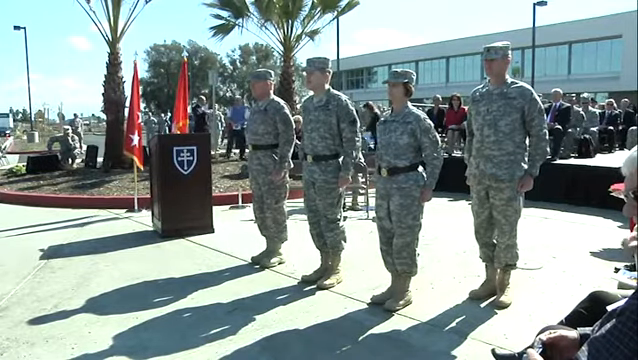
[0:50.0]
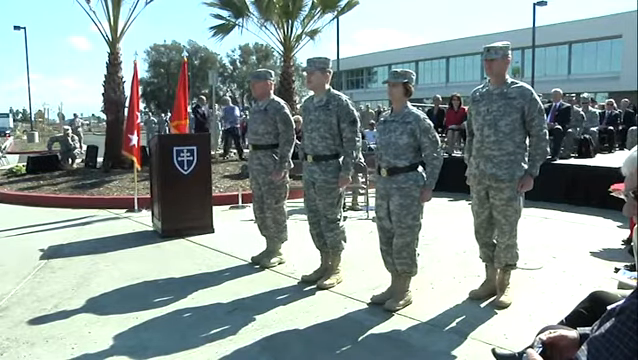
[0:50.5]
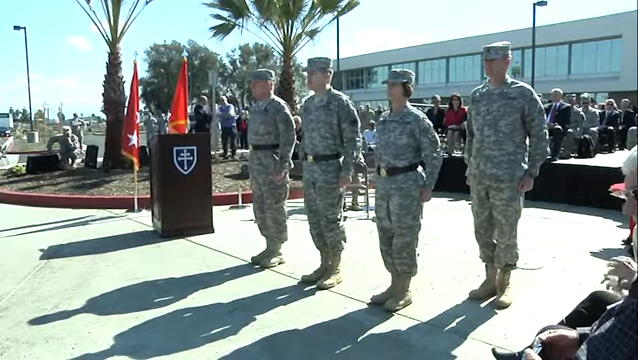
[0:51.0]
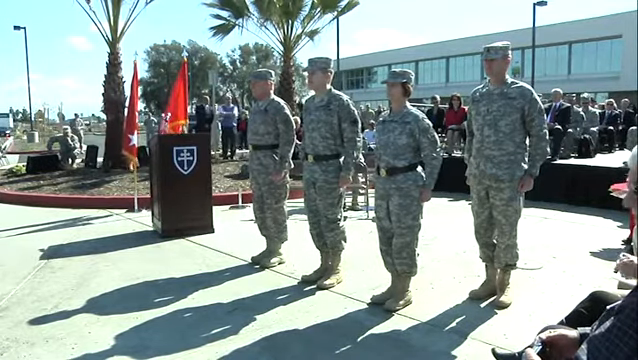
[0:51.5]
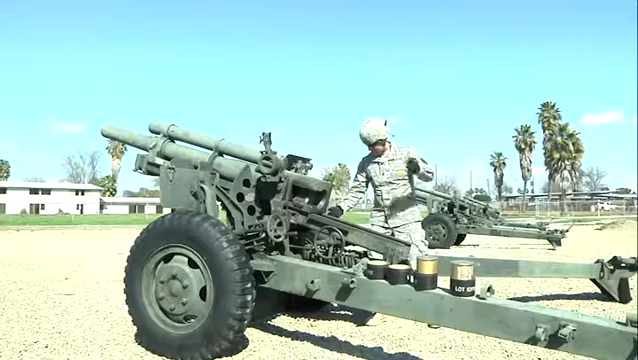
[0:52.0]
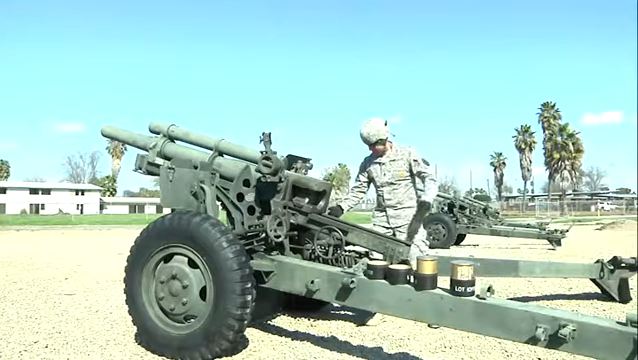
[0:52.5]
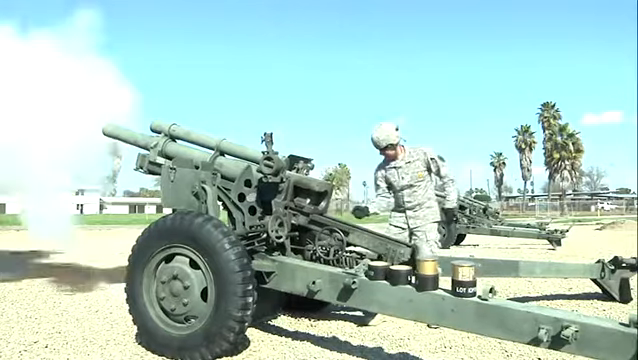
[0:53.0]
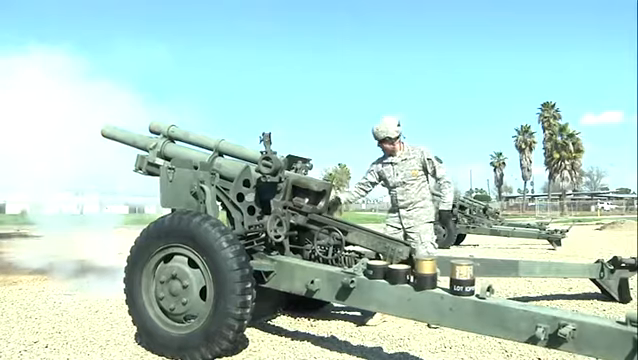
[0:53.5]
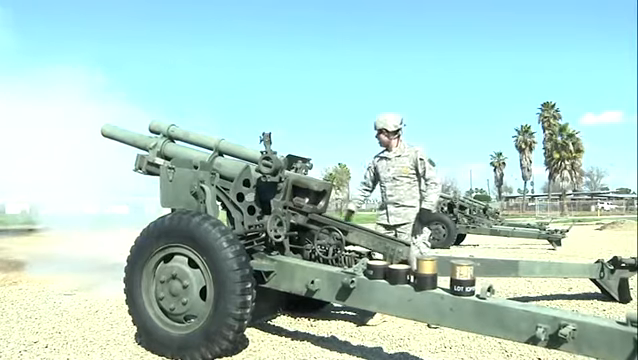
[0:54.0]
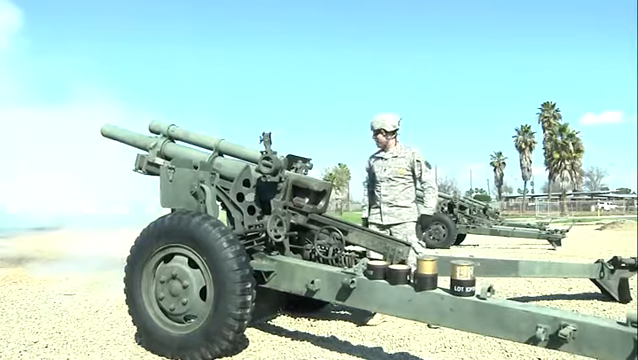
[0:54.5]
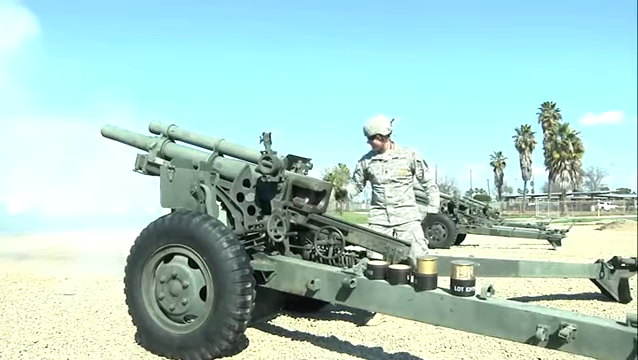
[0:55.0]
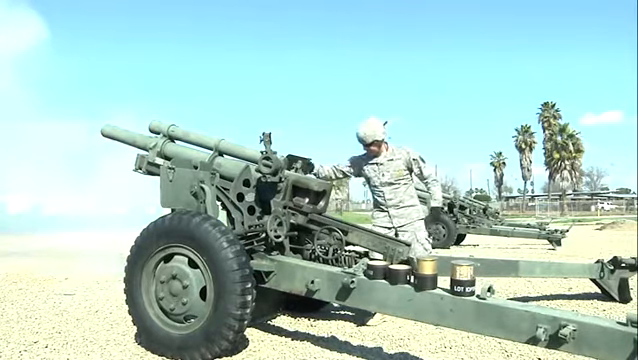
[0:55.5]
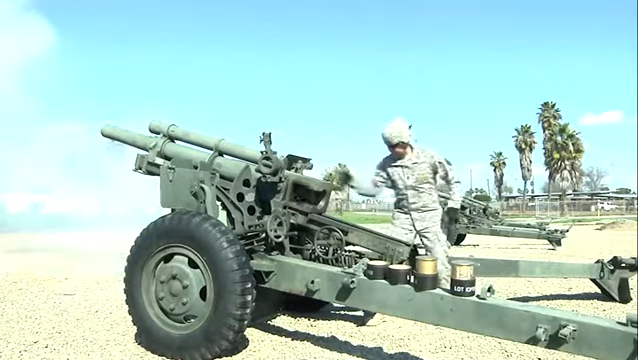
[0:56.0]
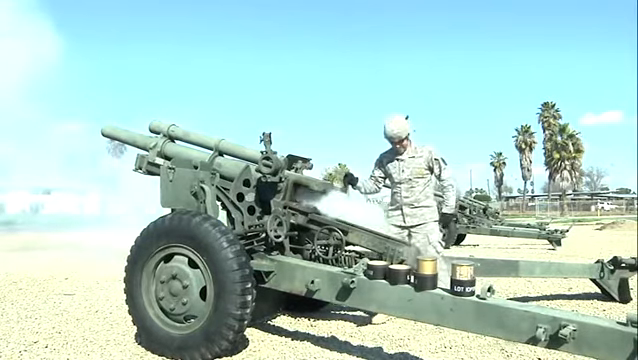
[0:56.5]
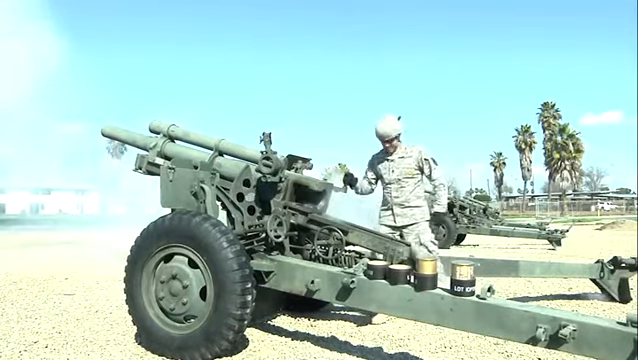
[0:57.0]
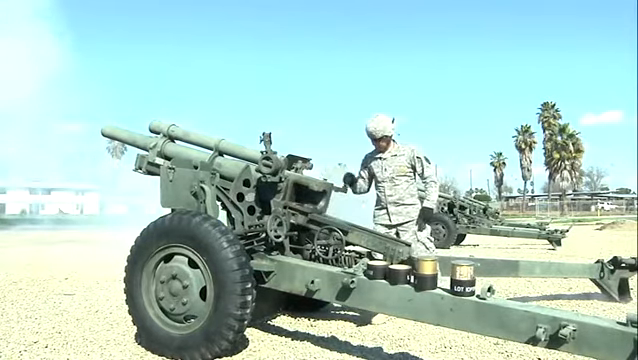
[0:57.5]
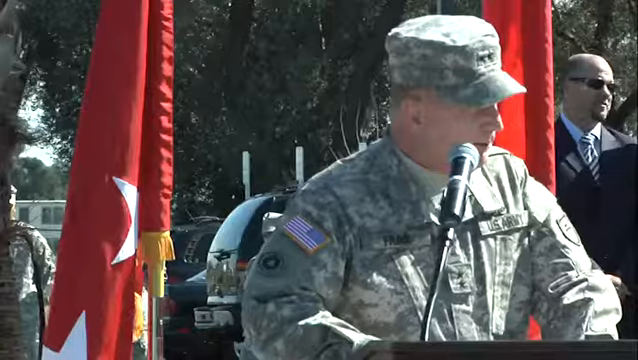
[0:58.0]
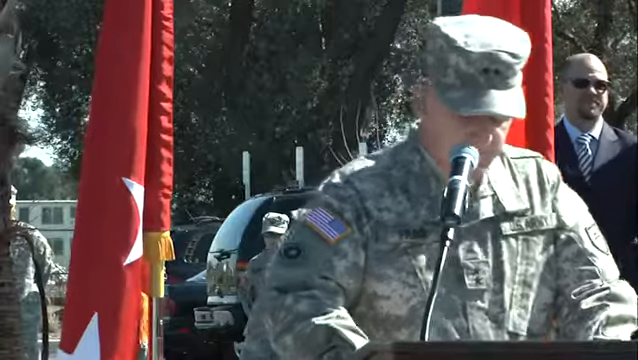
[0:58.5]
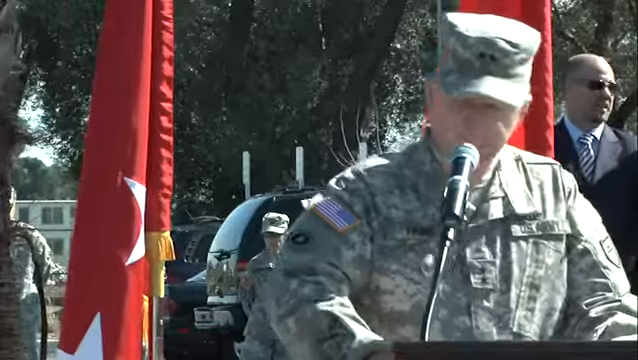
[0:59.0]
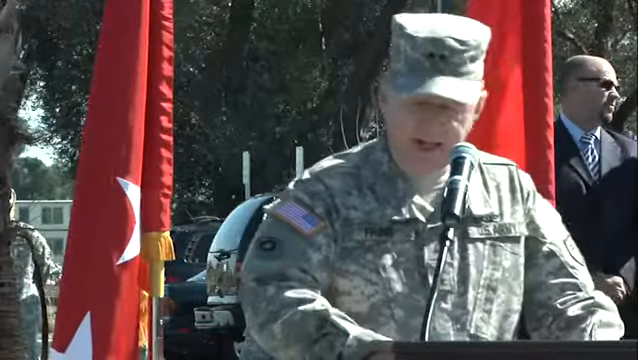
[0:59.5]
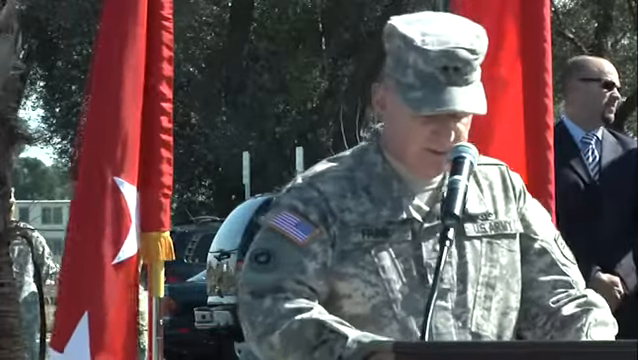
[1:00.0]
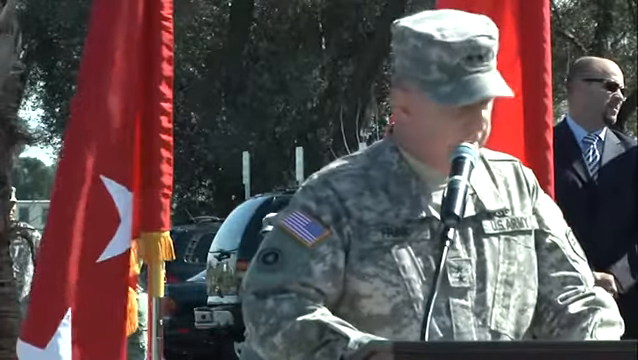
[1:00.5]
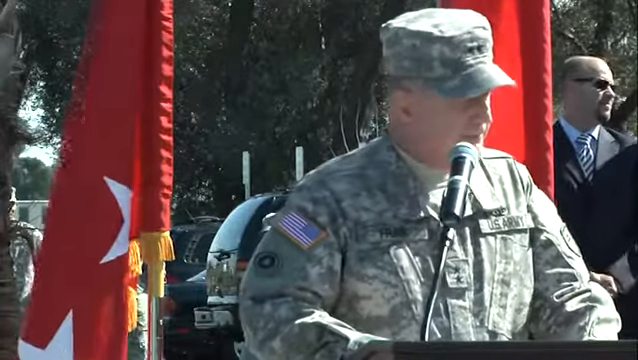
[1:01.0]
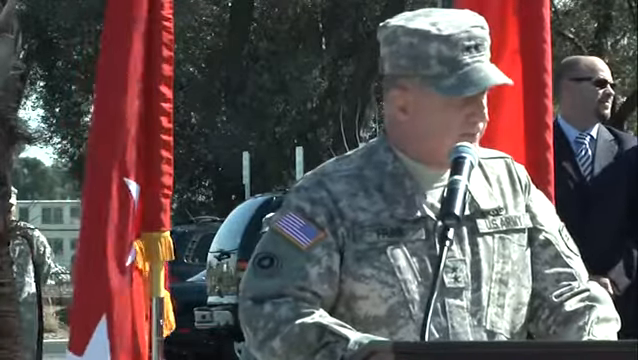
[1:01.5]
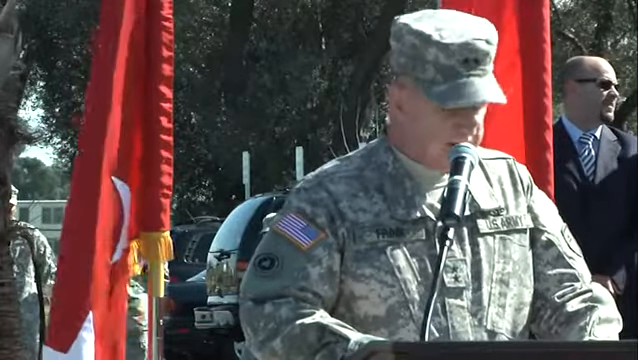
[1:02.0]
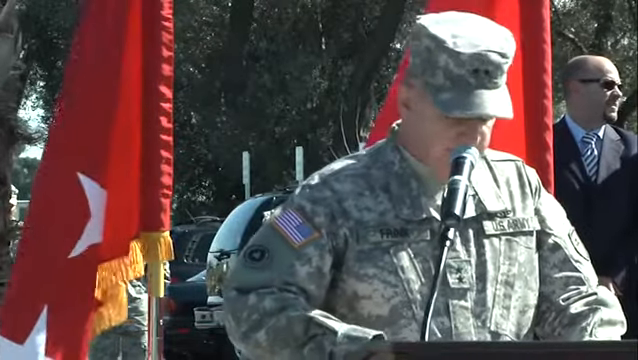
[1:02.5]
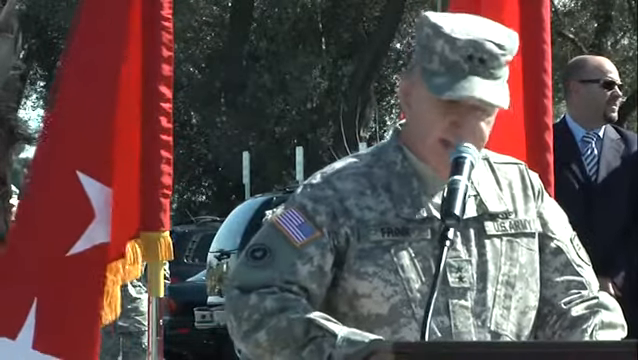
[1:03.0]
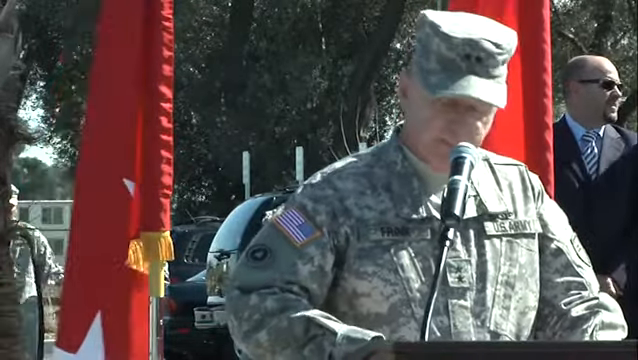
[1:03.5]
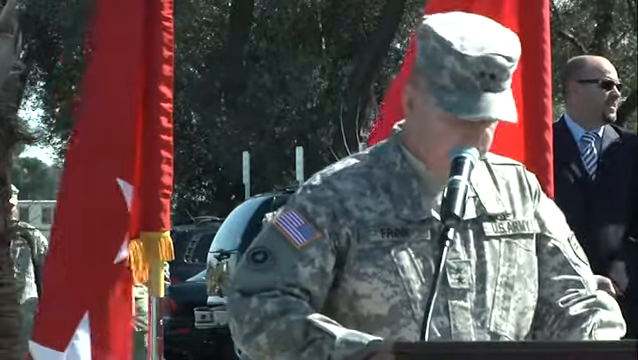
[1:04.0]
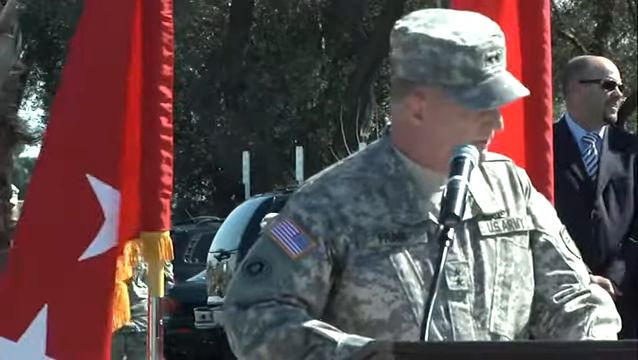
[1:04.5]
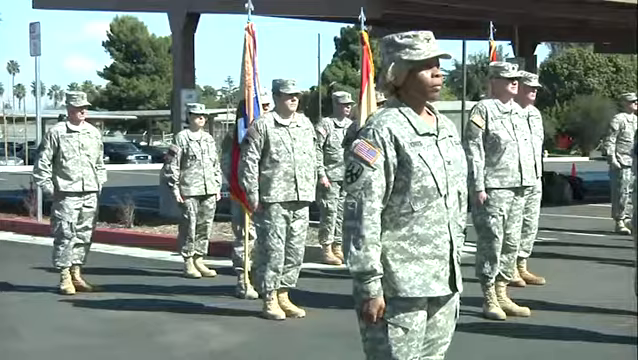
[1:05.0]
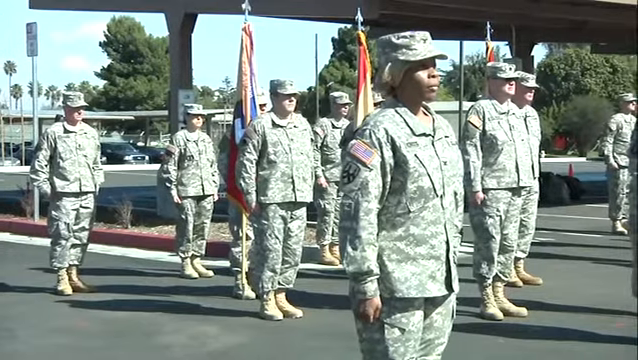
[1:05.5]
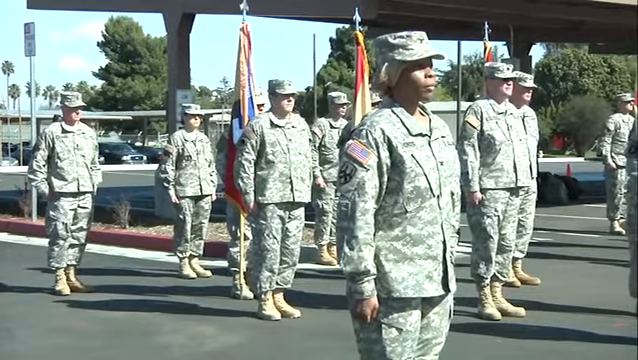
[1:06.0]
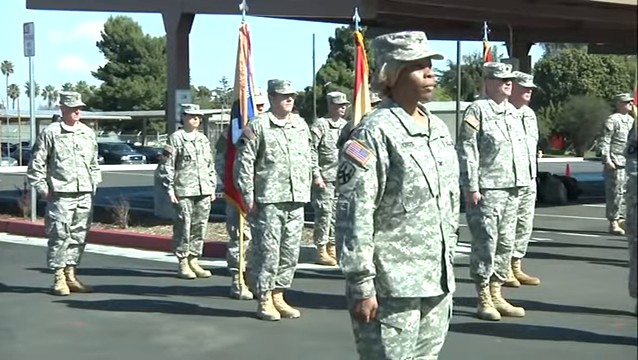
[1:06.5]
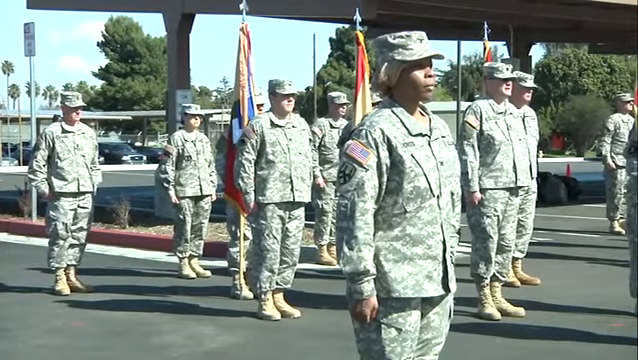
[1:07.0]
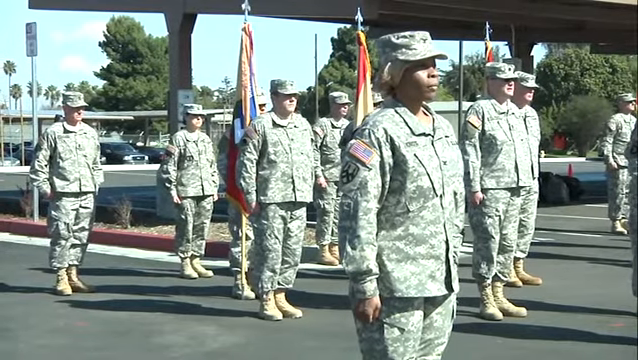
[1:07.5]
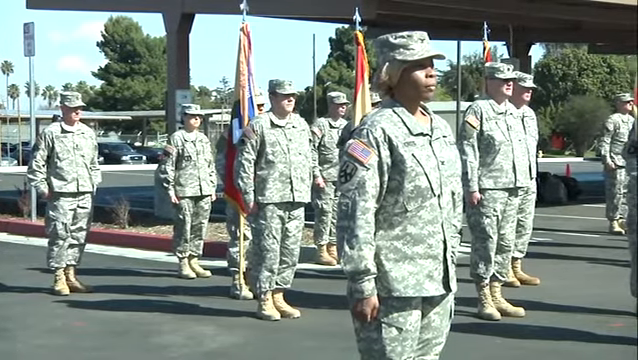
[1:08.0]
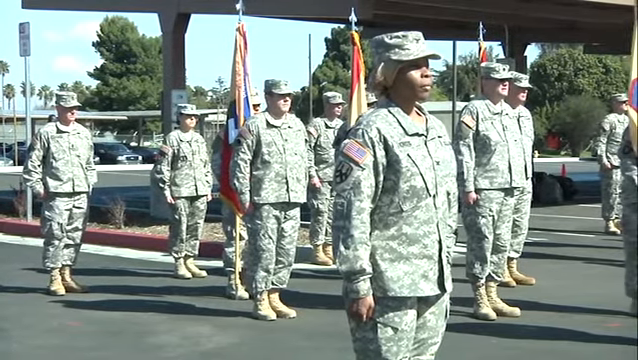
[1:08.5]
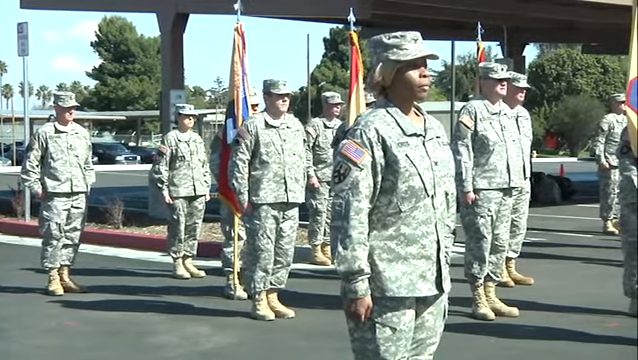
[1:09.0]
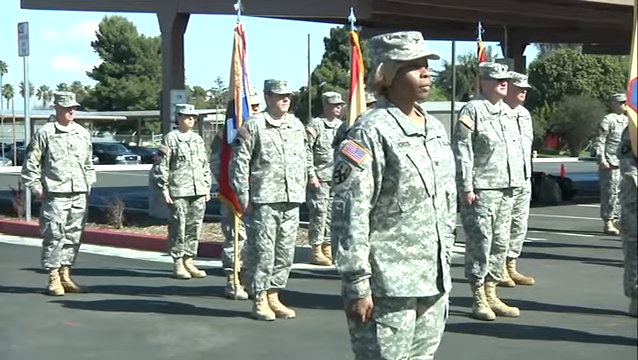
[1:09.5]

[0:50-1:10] Outdoors, four people in military uniforms of camouflage pants, shirts and hats are visible: closest to the camera is a man, to his right a woman, and to her right two men. Past them is a brown podium, and behind the podium are two flags on flagpoles that are not flying; they are visibly red with one white star, with orange fringe around the outsides. On the front of the podium is a picture of a shield with a cross on it. The video cuts to a green rocket launcher with two big tires. A person standing behind it pulls a lever and it shoots a missile out, then he pulls another lever and the shell comes out the back.